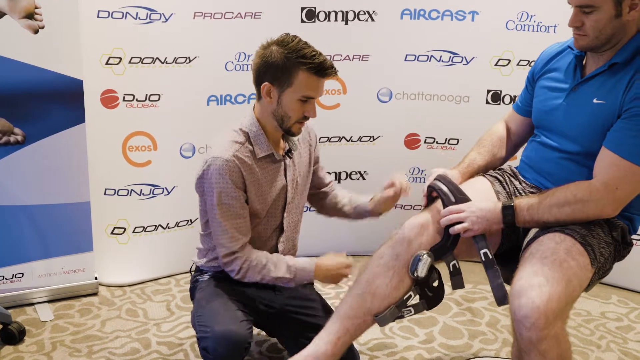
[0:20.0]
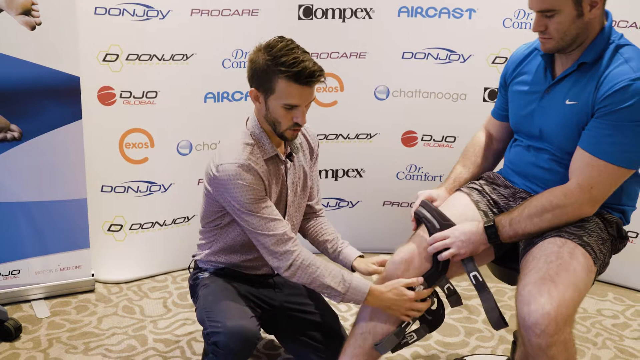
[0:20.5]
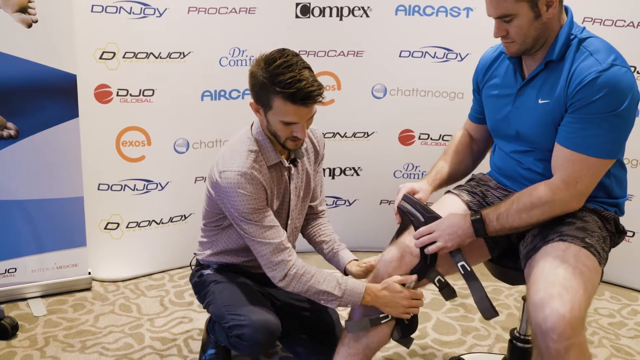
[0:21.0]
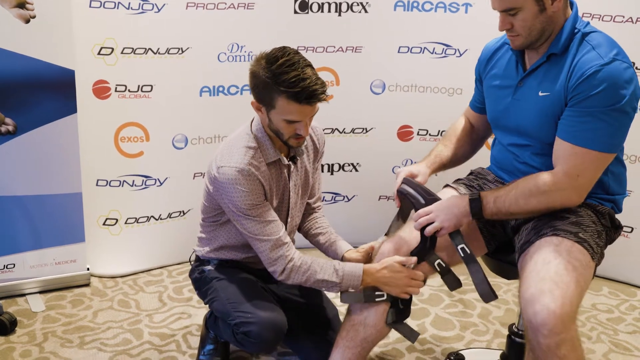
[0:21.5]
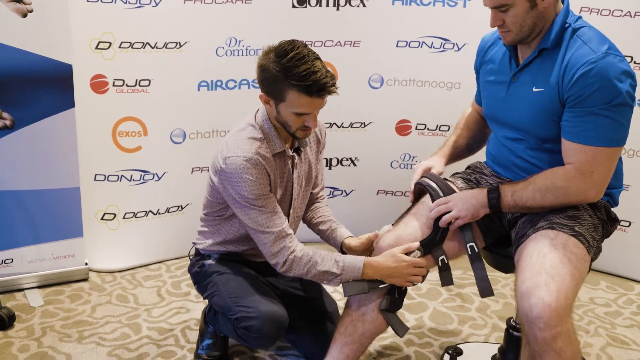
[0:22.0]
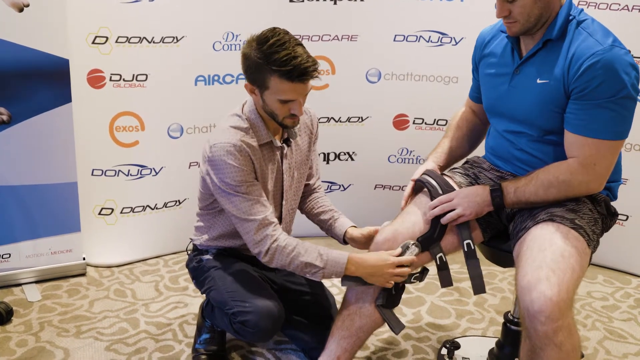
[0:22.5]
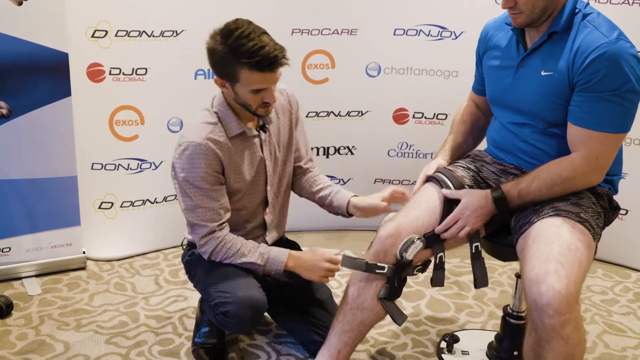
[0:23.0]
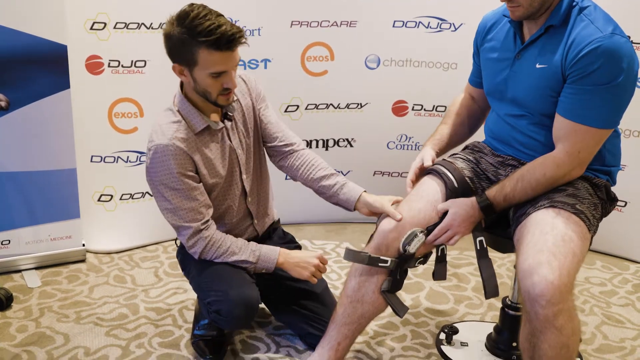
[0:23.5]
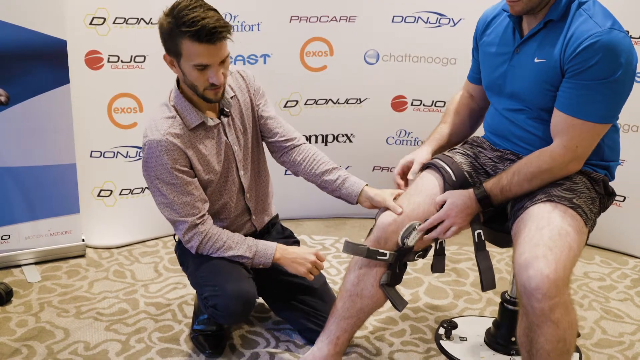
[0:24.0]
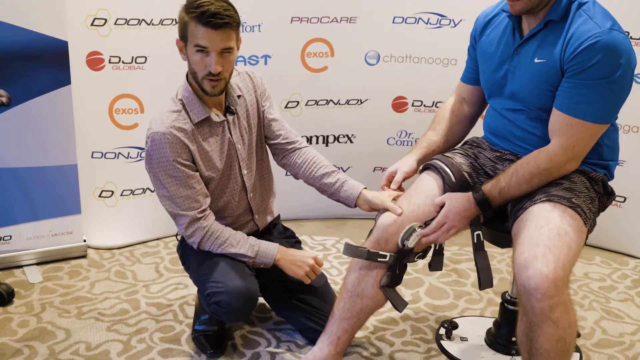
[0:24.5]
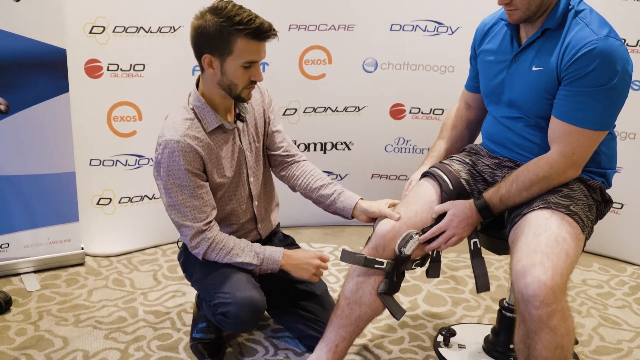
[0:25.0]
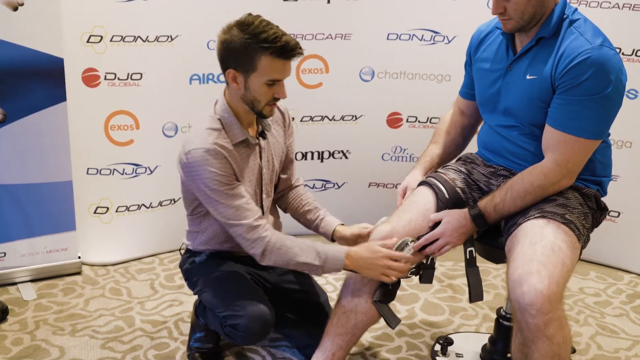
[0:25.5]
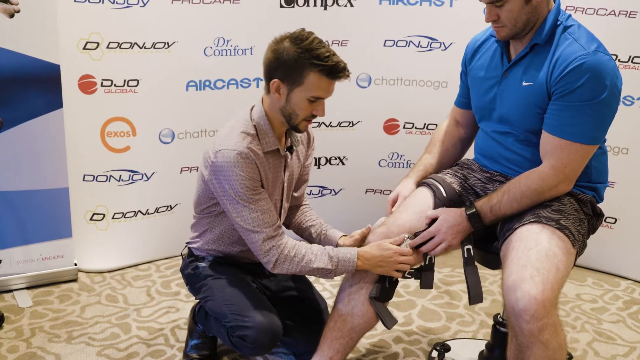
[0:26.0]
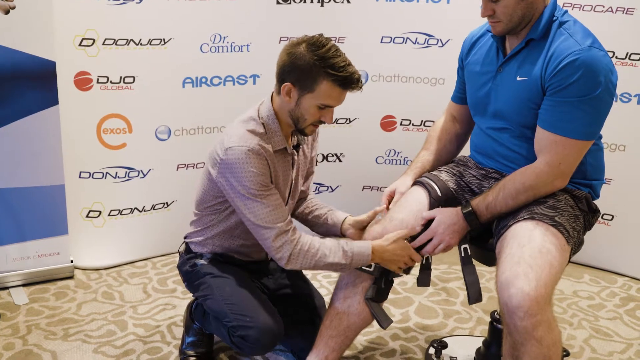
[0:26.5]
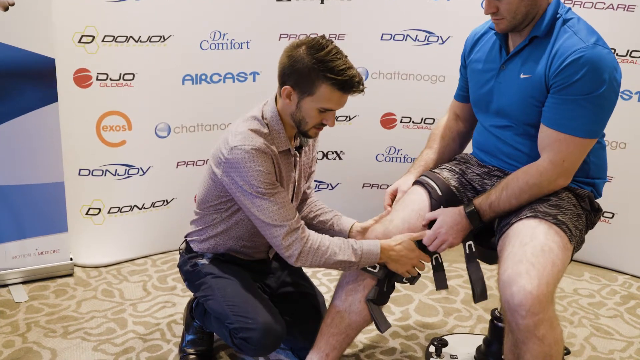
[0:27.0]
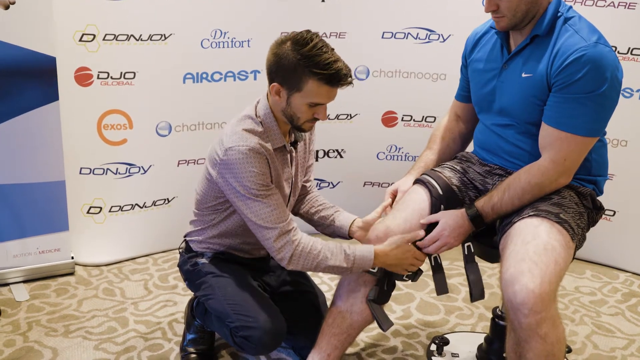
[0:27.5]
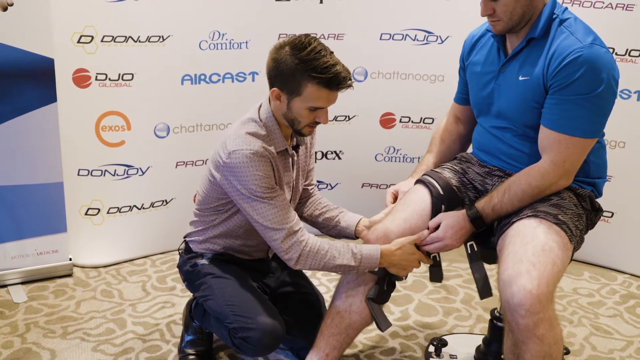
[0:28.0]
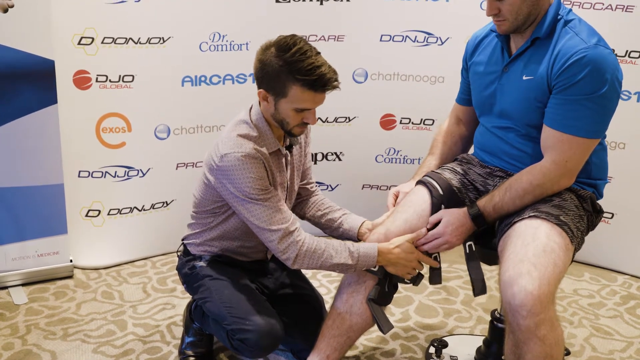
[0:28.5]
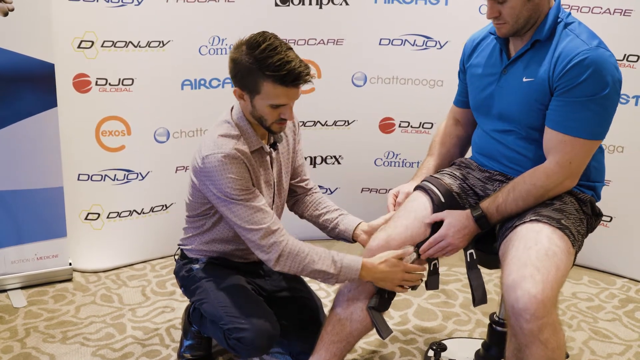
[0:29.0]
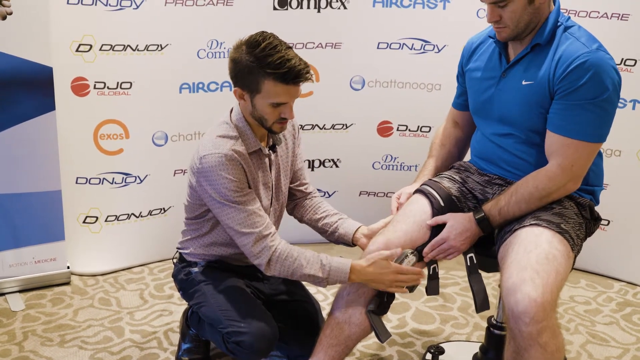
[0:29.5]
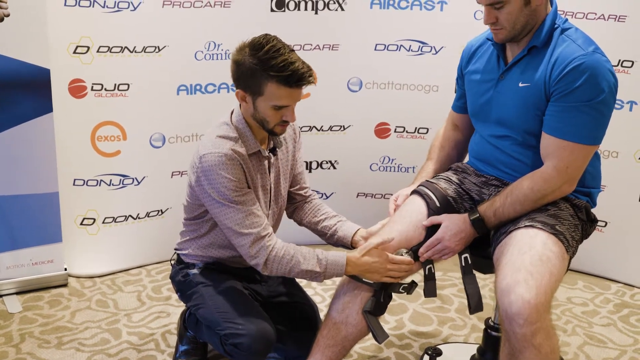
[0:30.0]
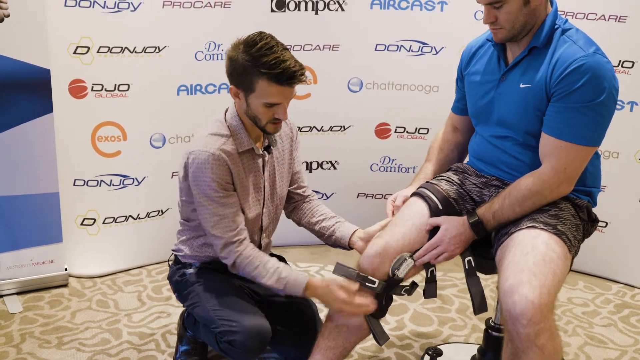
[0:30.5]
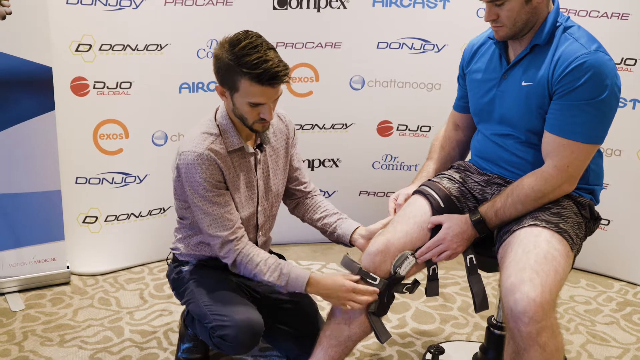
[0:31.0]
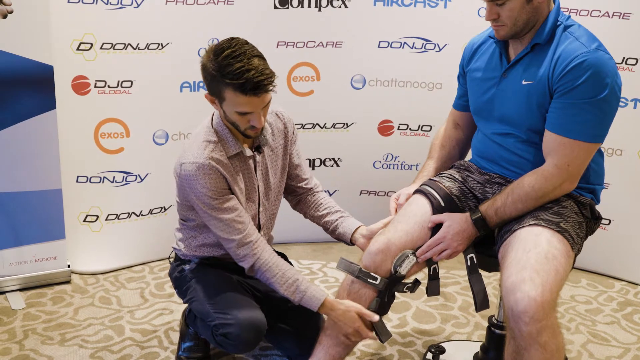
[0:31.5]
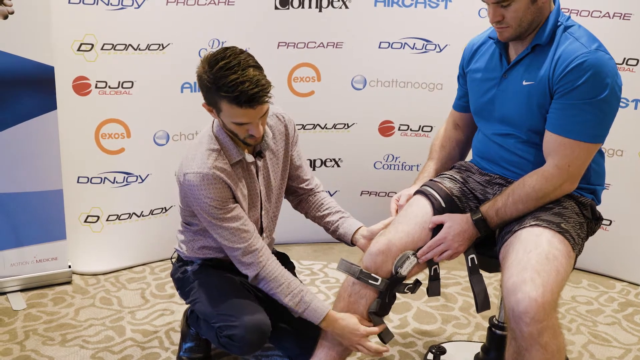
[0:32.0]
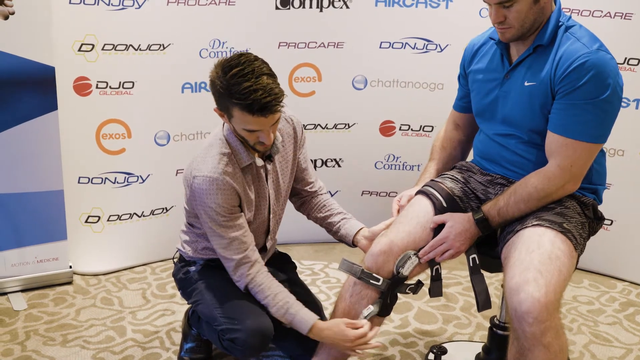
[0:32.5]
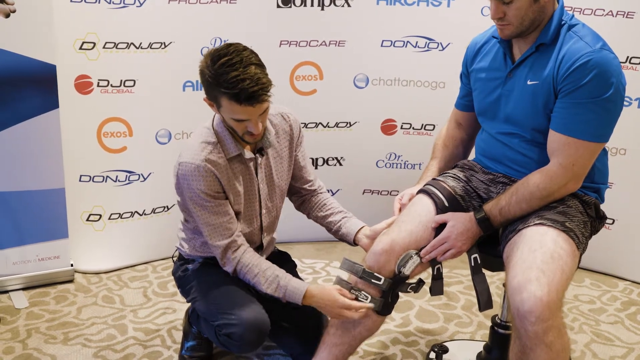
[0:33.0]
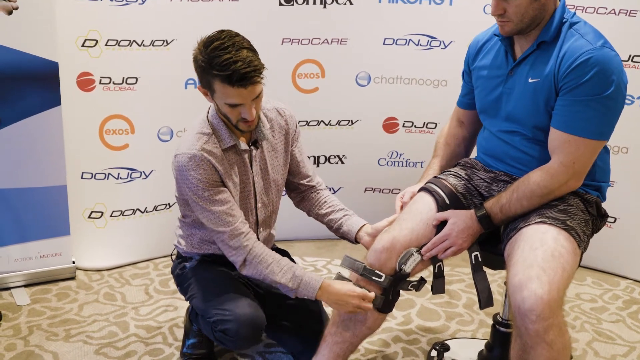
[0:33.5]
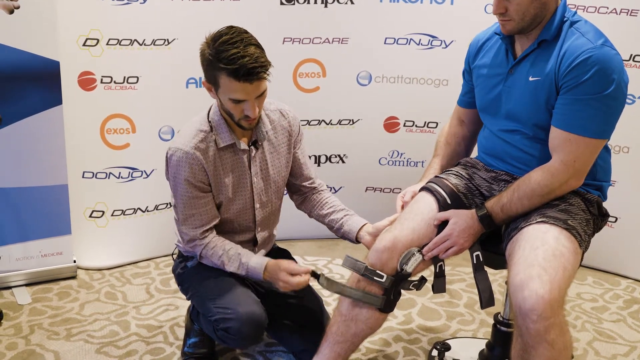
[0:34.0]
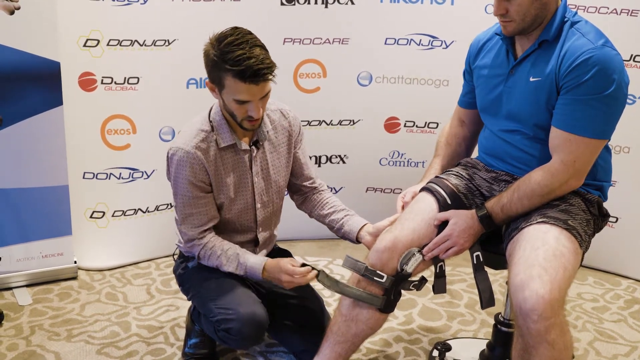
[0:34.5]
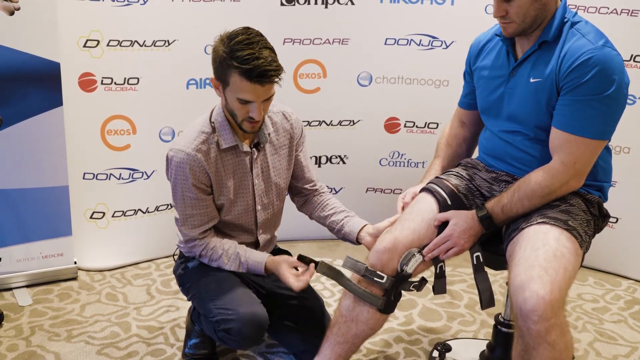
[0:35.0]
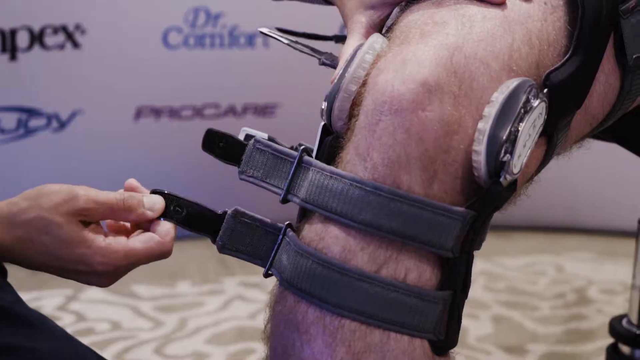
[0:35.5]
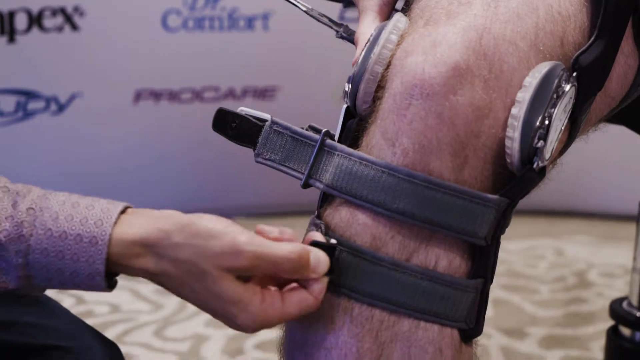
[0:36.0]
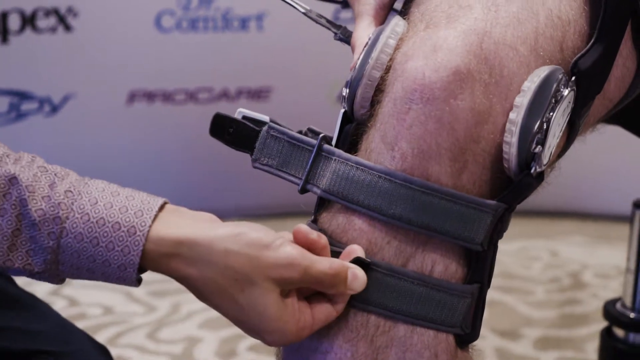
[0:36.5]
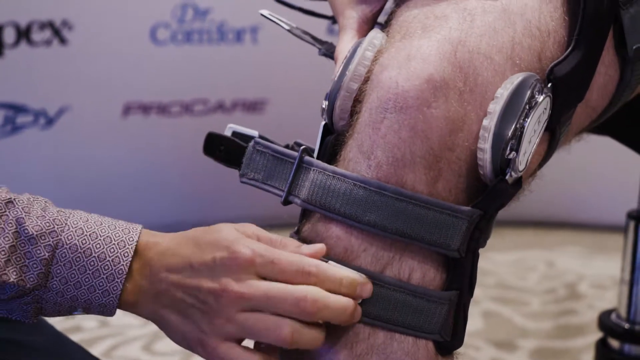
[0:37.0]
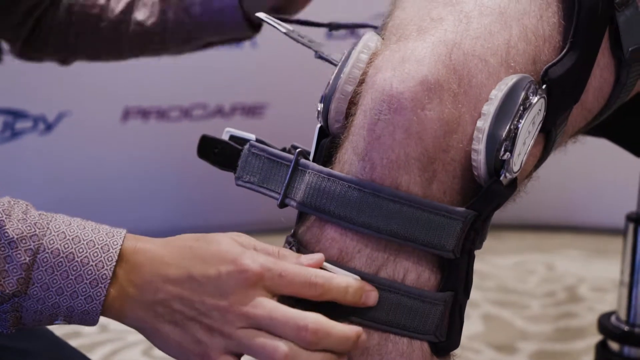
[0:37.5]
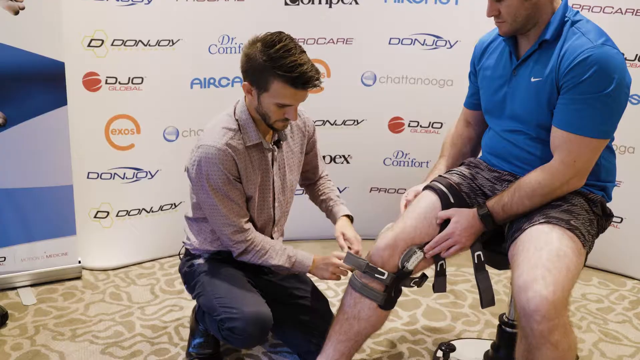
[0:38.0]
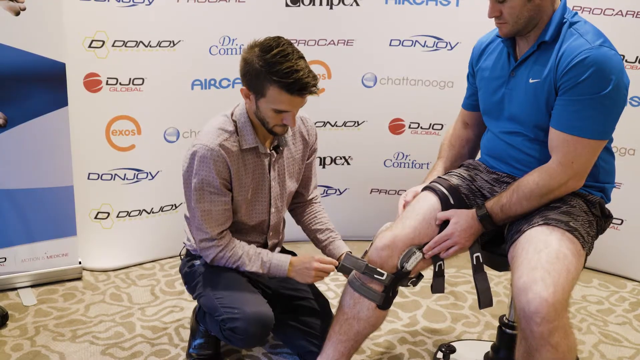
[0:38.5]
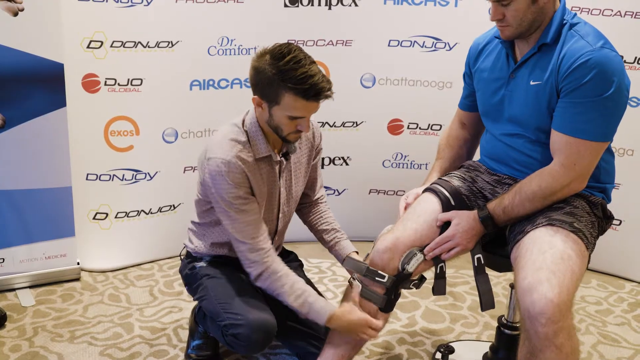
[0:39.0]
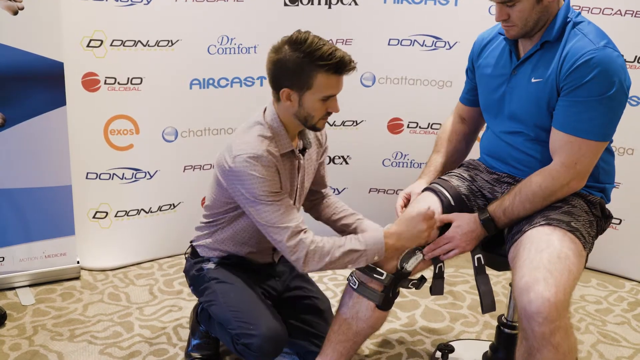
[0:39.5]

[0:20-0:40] The man in the blue short-sleeved Nike polo shirt and dark shorts sits on a chair while the man in the light brown button-up shirt and dark slacks kneels in front of him, helping him put his leg into a black brace that fits over his thigh and knee. The kneeling man more or less holds the seated man's leg just above the knee as he talks to the camera. He adjusts the brace on the leg, taps it on the right side a few times, and makes sure it is in a good position. He then takes the straps, starting from the bottom, and pulls one out so it becomes longer. A close-up of the straps shows he has pulled the strap across the top of the shin, through a little loop, looped it back and buckled it. He then reaches for another strap on the top of the thigh.